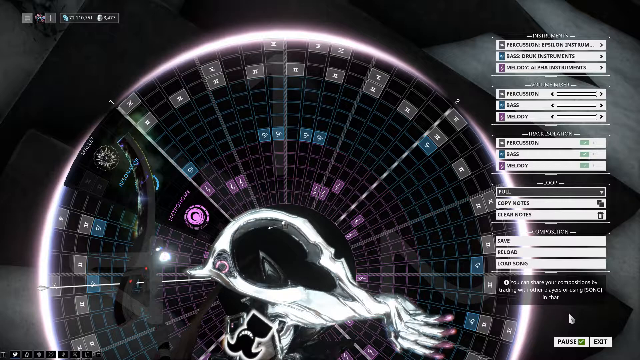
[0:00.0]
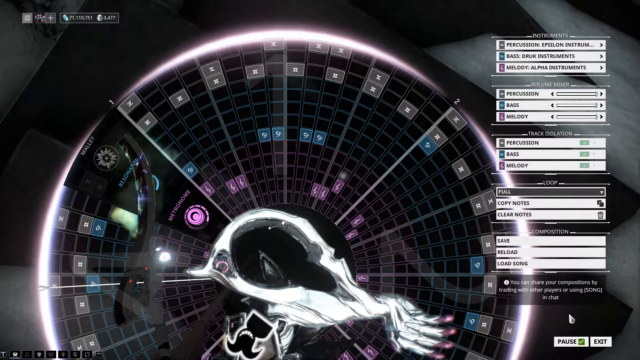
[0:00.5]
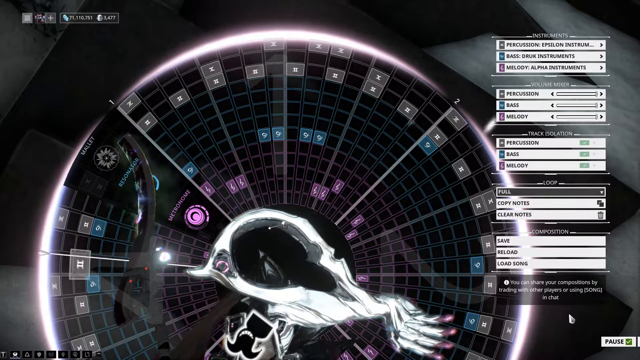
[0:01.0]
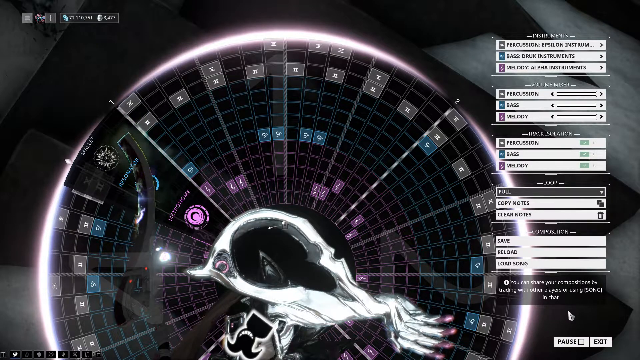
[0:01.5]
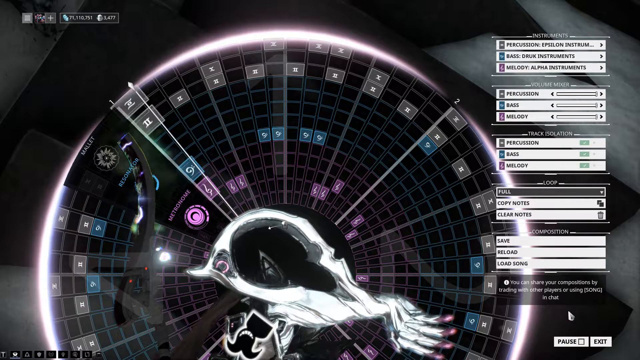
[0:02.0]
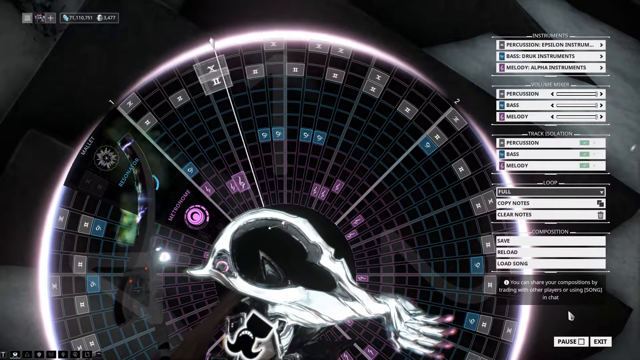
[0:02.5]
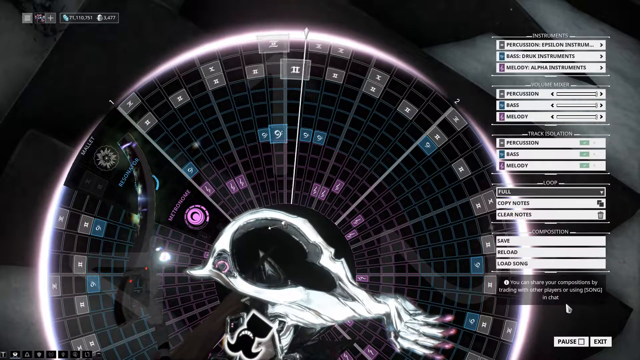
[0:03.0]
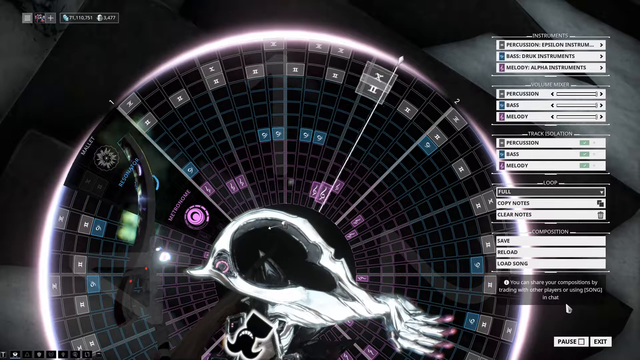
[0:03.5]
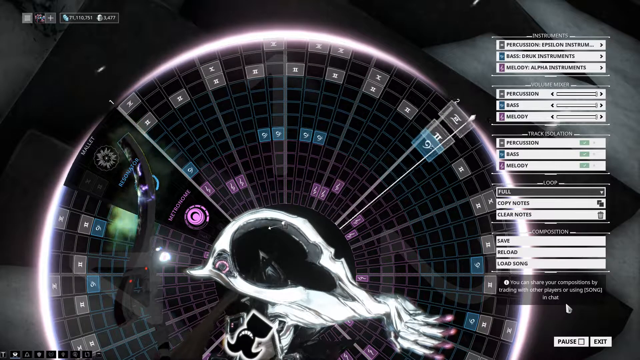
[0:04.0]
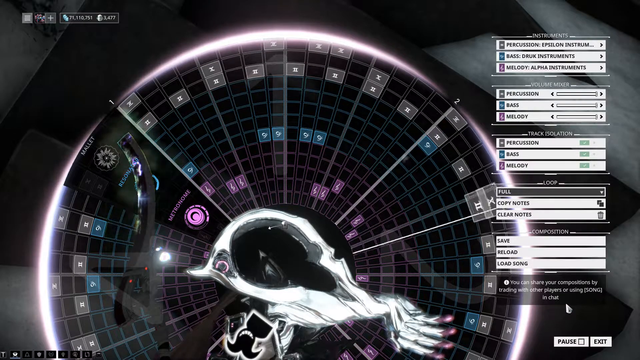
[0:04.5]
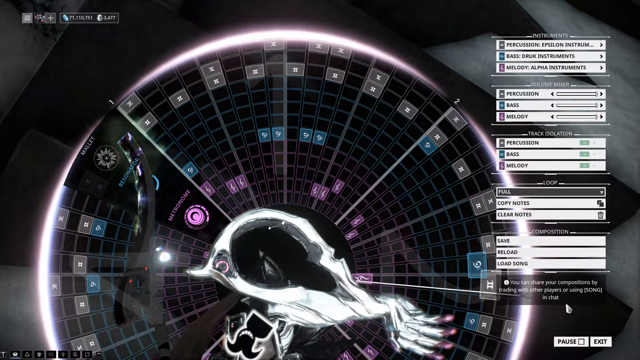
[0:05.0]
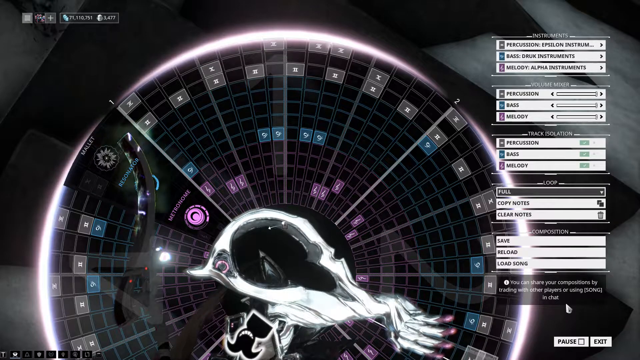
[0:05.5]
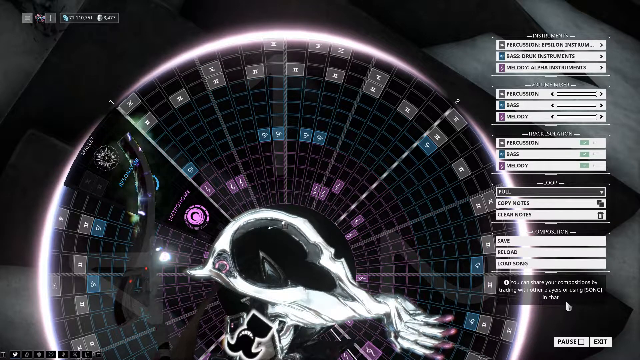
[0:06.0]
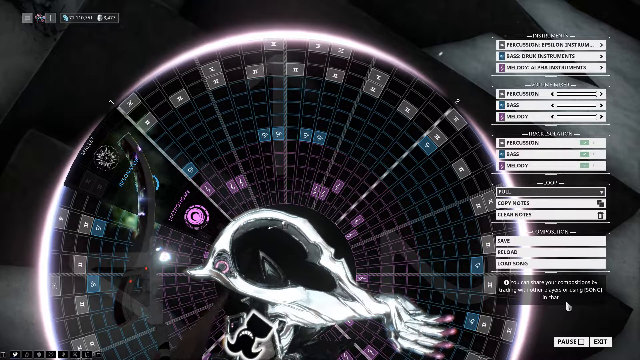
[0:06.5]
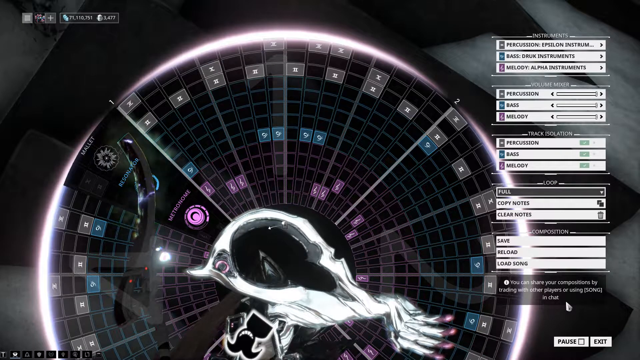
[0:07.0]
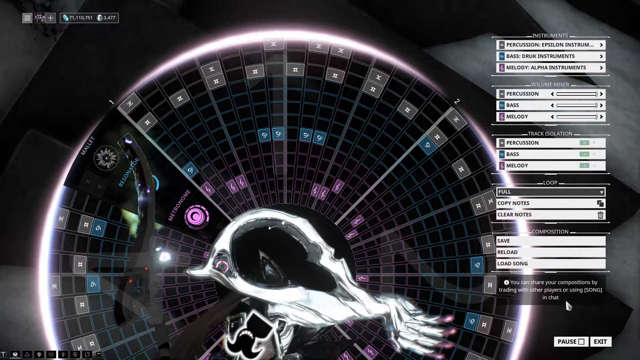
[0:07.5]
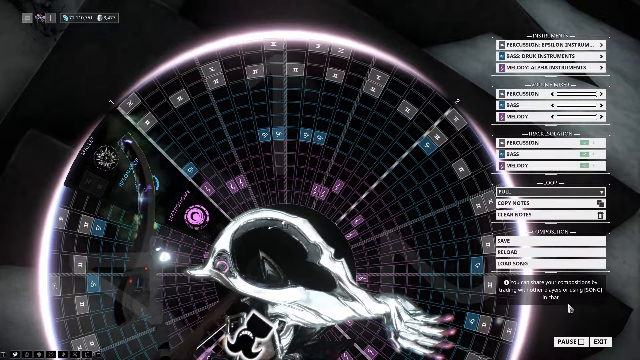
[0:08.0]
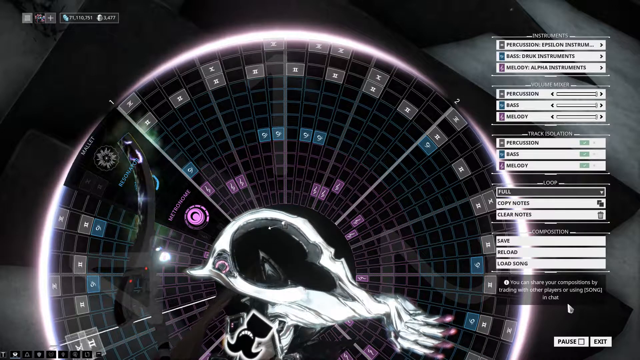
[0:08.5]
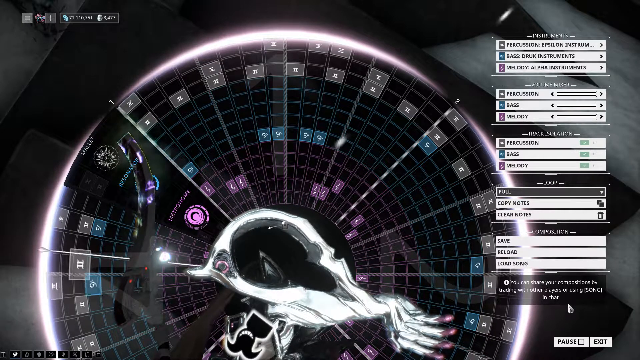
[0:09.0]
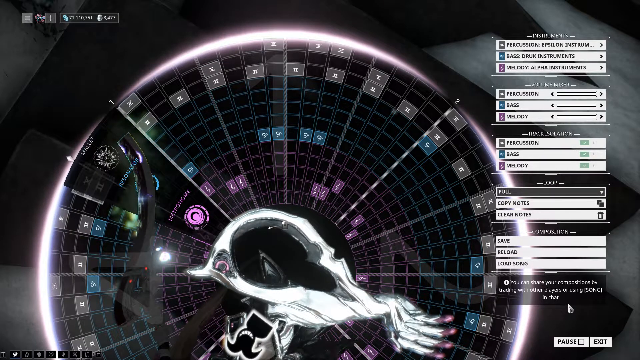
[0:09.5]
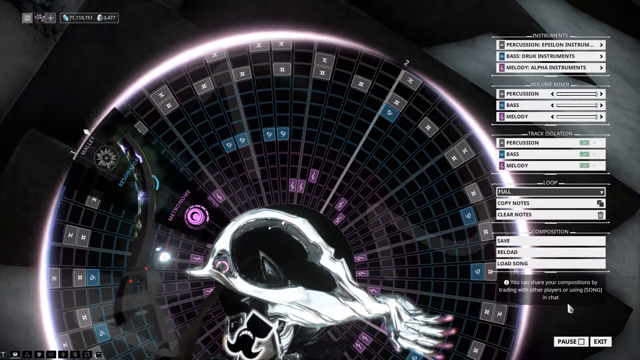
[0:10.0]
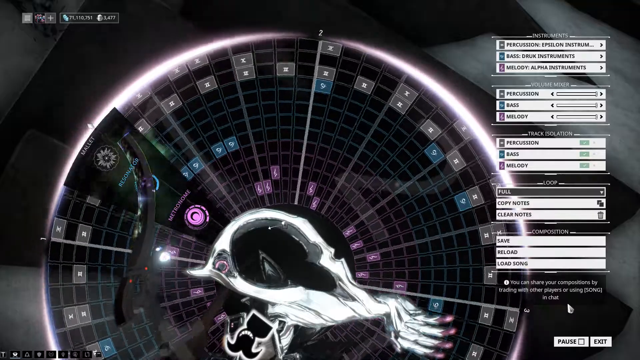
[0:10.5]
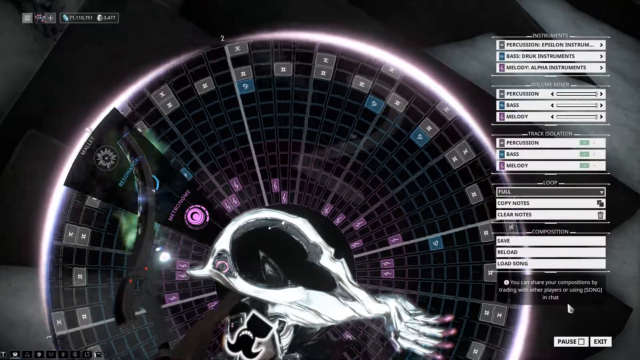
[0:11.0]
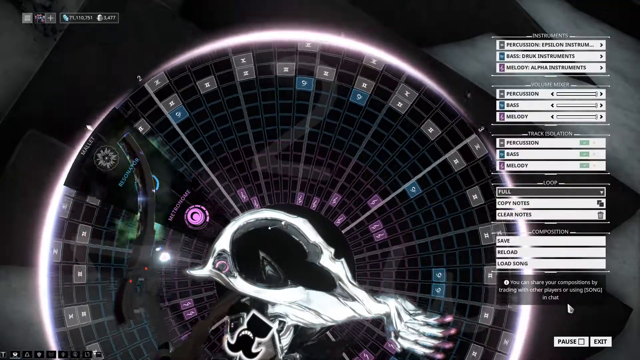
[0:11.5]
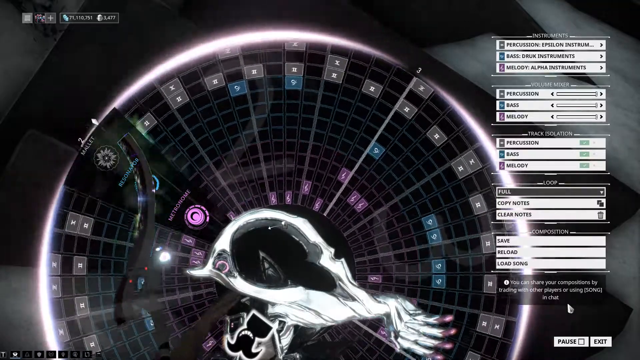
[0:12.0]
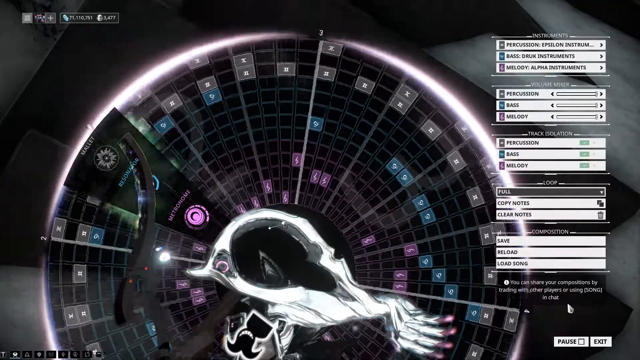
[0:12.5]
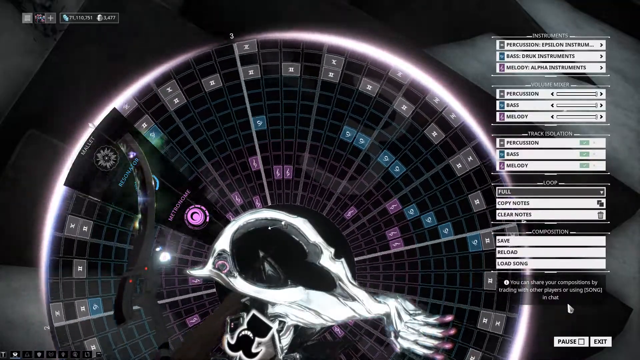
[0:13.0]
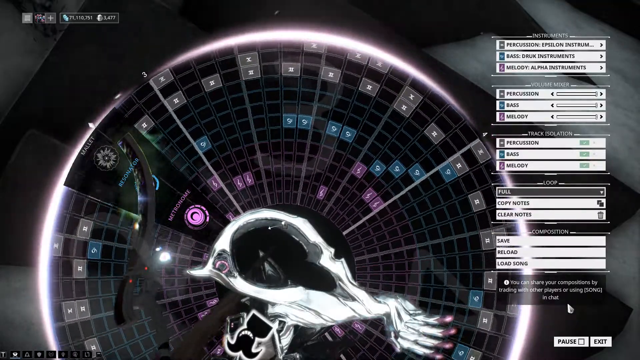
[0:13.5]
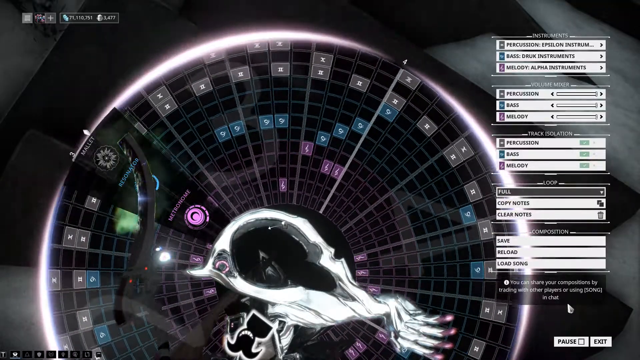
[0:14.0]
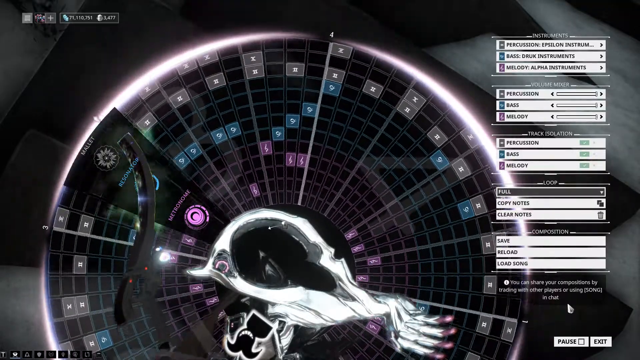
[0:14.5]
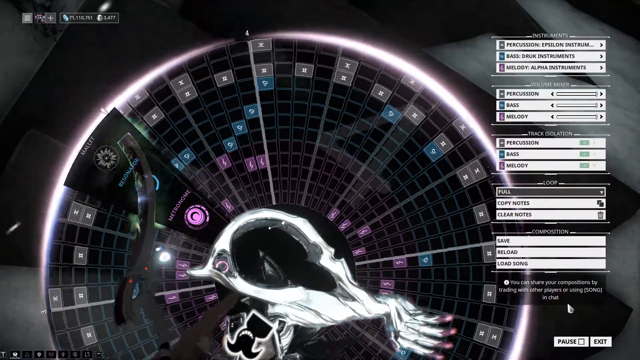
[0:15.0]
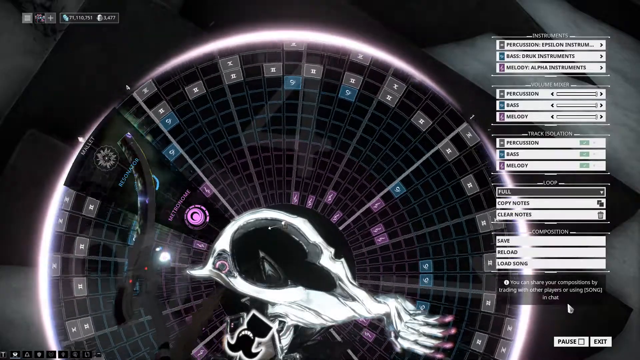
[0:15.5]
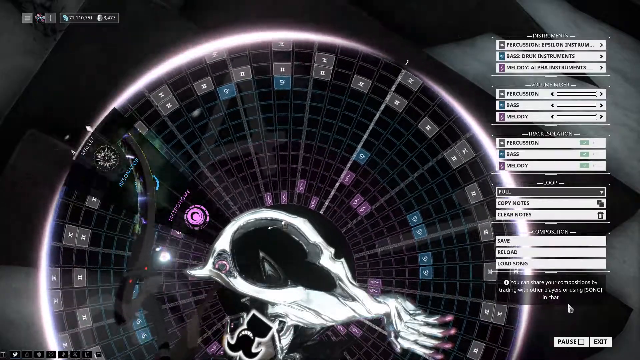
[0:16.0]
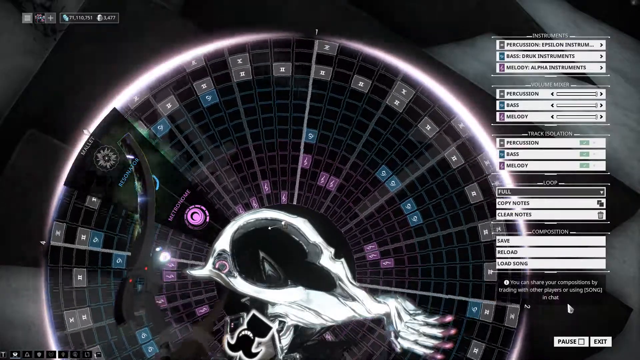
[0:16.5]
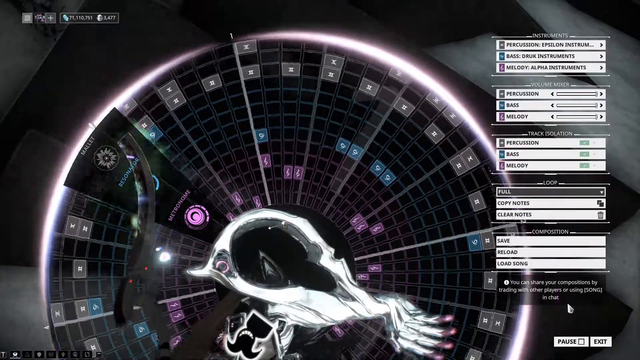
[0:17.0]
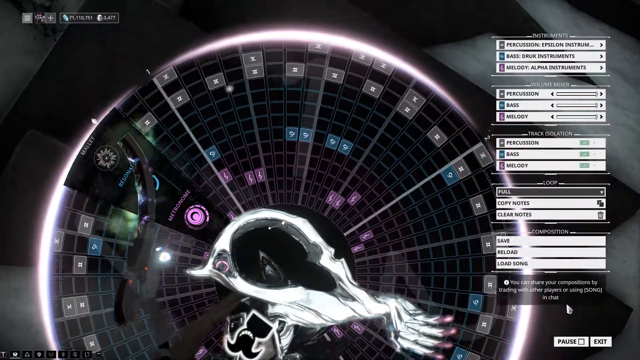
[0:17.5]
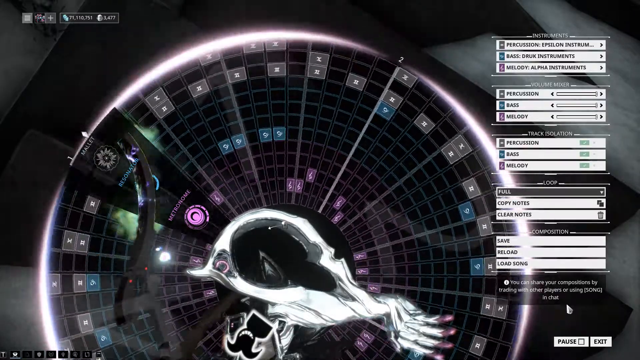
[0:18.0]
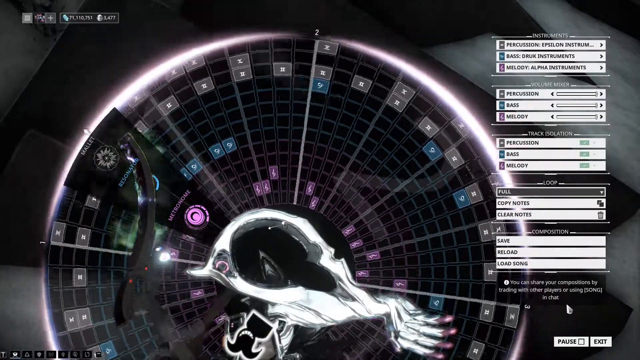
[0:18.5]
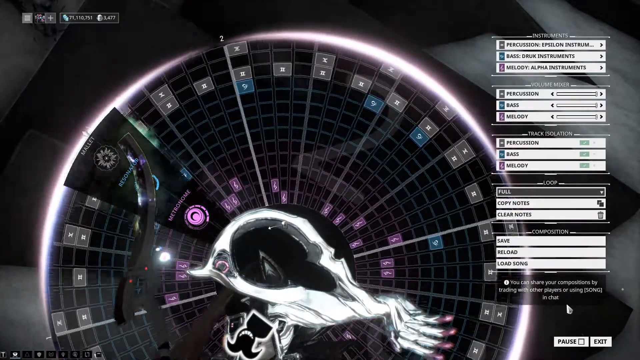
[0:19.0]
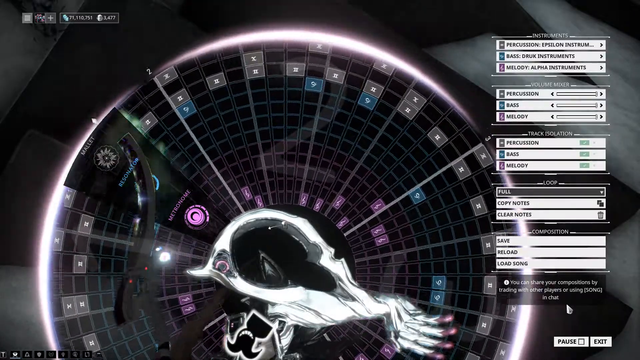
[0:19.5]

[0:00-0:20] A scanner, somewhat like a radar scanner, fills the screen: a circular module made up of many smaller sections. It is segmented, with lots of little squares on each segment, and looks like a spinning wheel. On the right-hand side of the screen are words and sliders reading "percussion", "bass drum" and "melody", along with "copy notes", "clear notes", "save", "reload" and "load songs", suggesting a digital instrument or sequencer of some kind. The background is dark black to grey, and the wheel is bright white as if glowing. The squares on the segments are a light bluey and greeny colour and carry symbols that look like musical notes. In the middle of the wheel is a strange, abstract fluid shape in white.